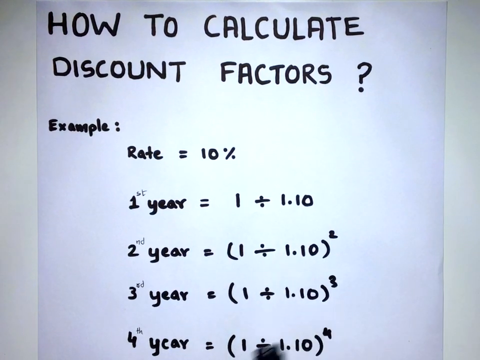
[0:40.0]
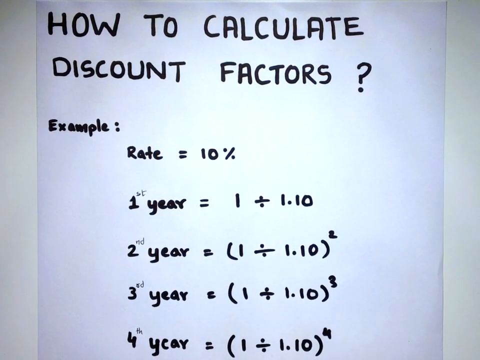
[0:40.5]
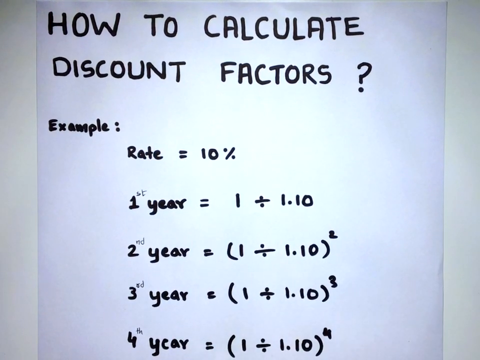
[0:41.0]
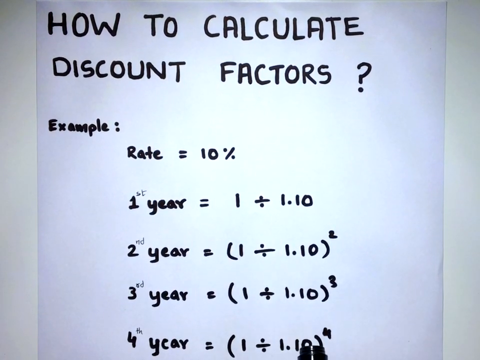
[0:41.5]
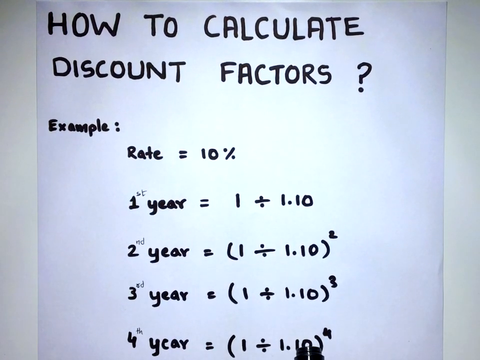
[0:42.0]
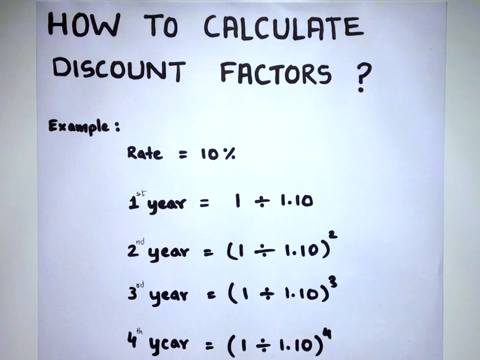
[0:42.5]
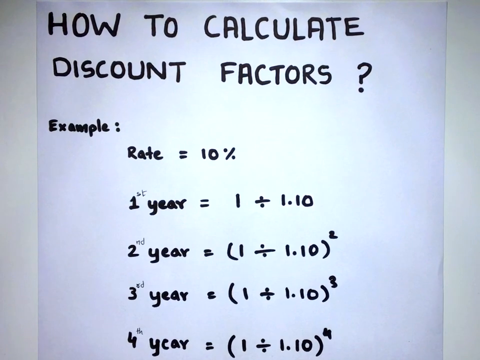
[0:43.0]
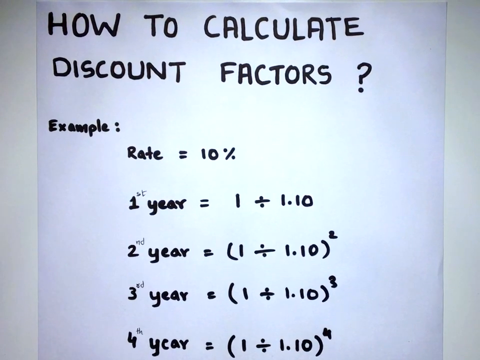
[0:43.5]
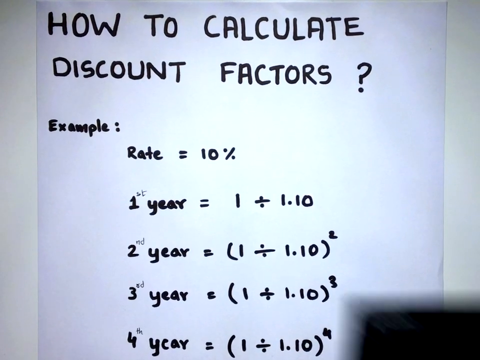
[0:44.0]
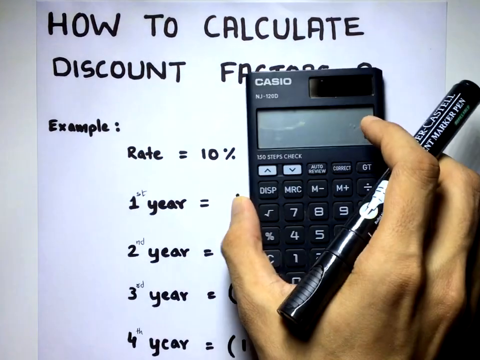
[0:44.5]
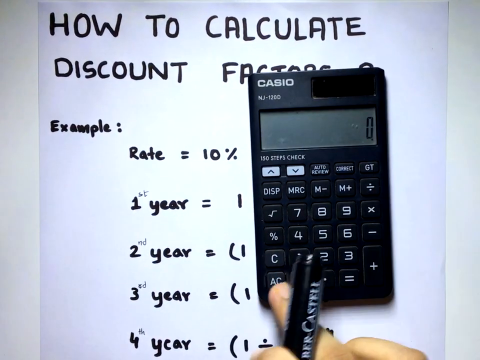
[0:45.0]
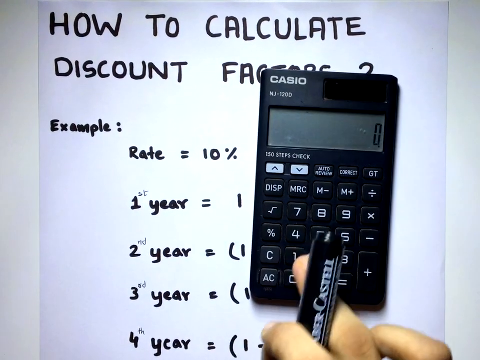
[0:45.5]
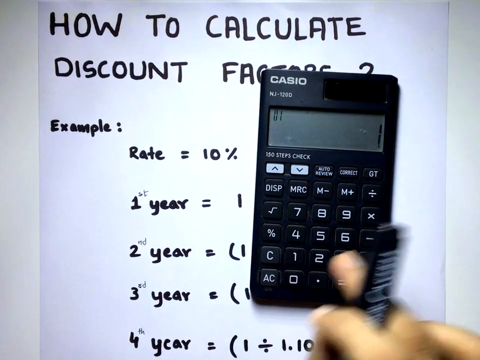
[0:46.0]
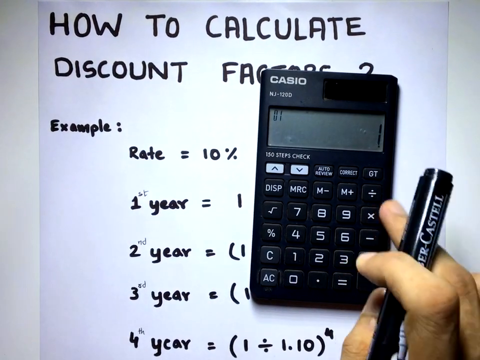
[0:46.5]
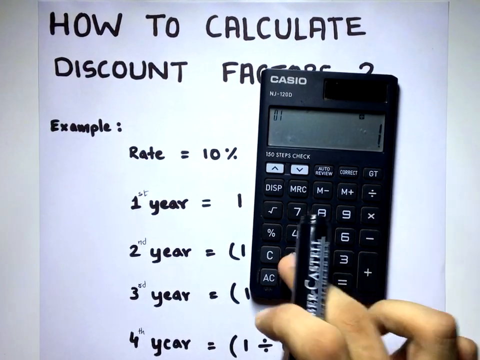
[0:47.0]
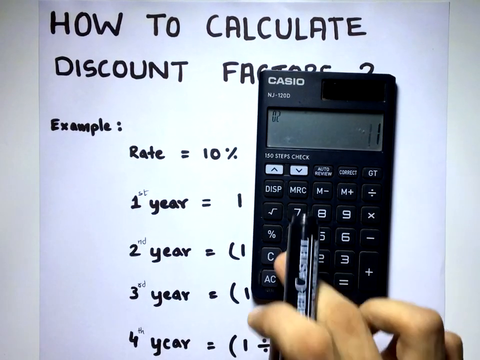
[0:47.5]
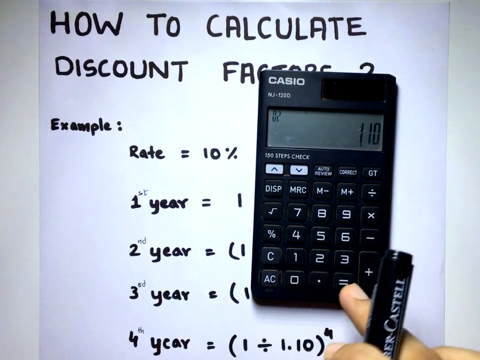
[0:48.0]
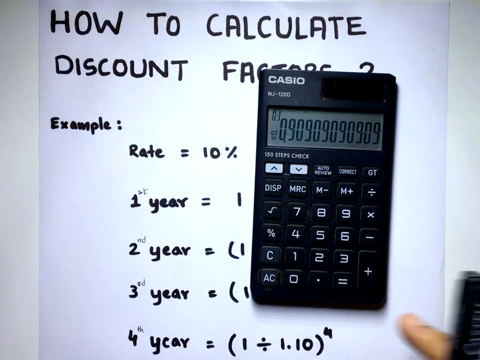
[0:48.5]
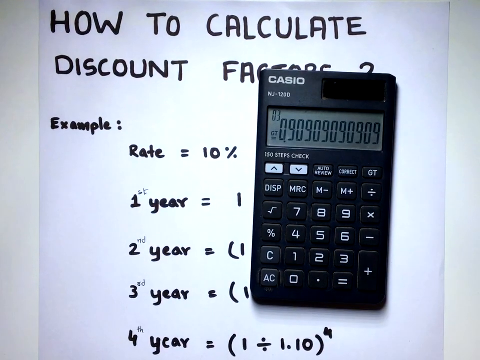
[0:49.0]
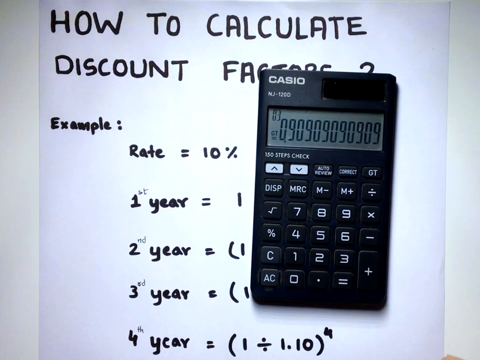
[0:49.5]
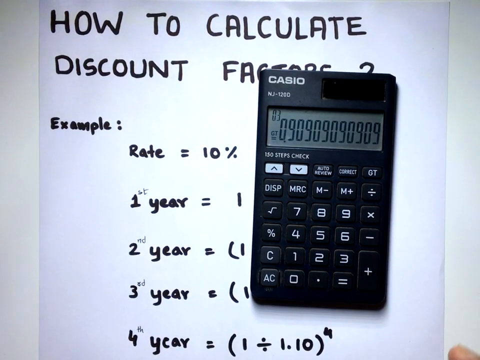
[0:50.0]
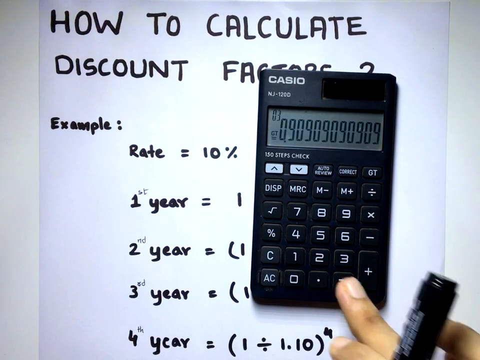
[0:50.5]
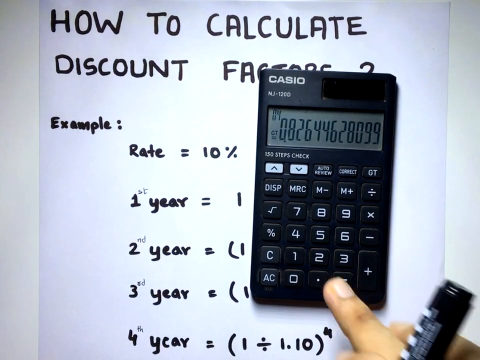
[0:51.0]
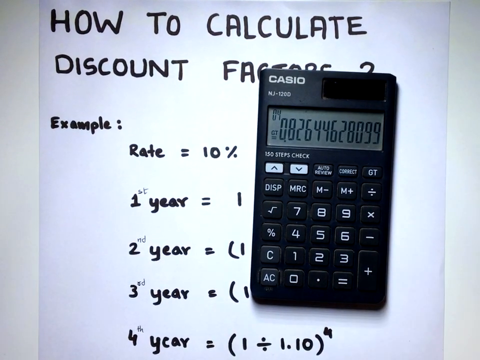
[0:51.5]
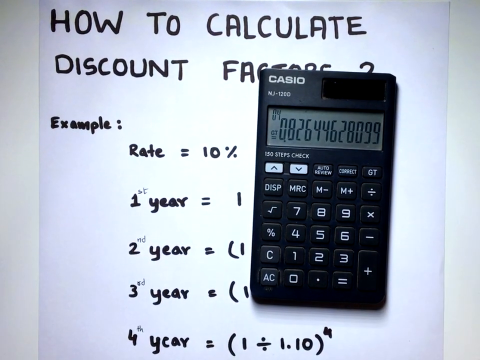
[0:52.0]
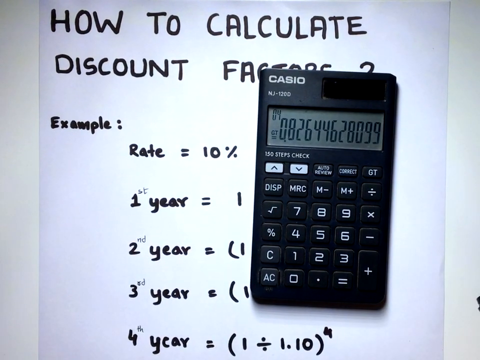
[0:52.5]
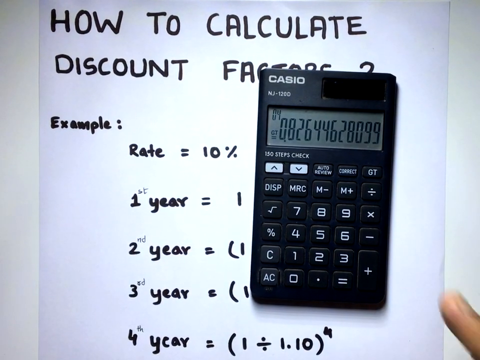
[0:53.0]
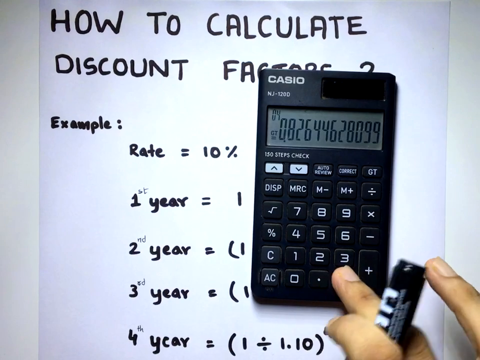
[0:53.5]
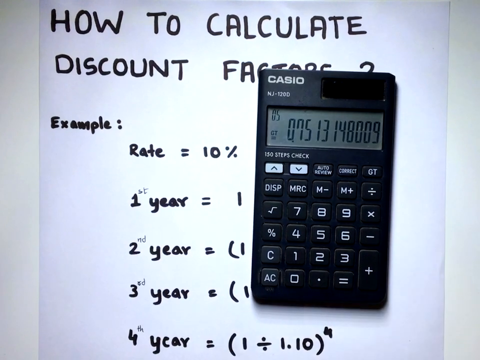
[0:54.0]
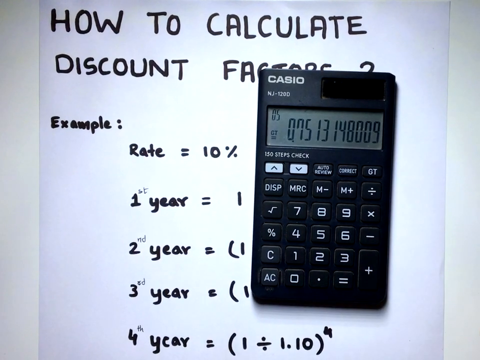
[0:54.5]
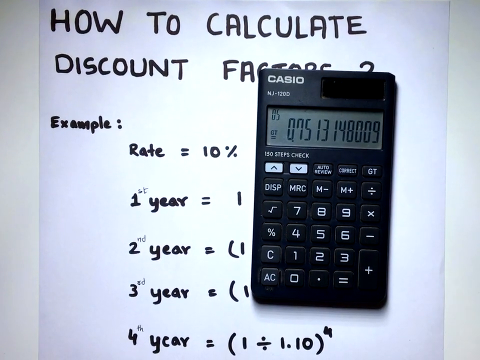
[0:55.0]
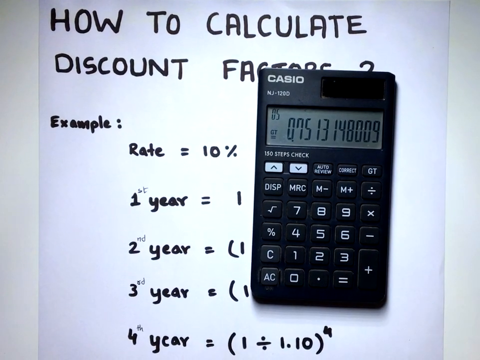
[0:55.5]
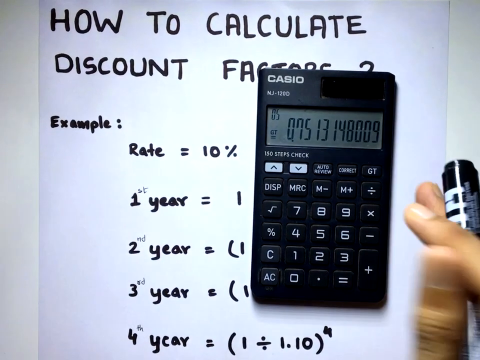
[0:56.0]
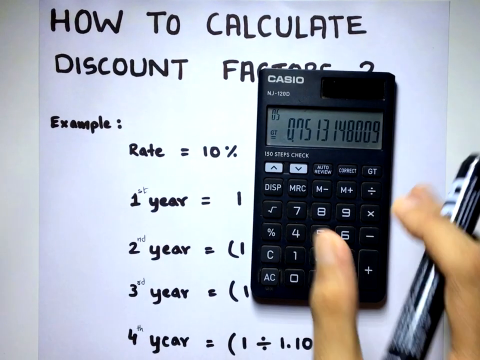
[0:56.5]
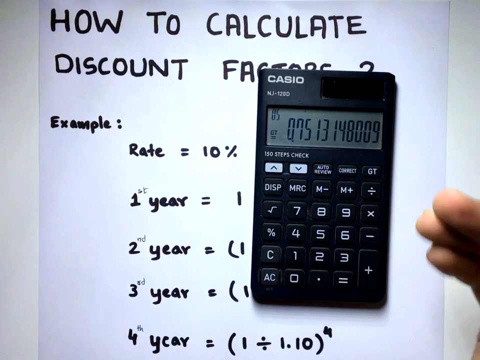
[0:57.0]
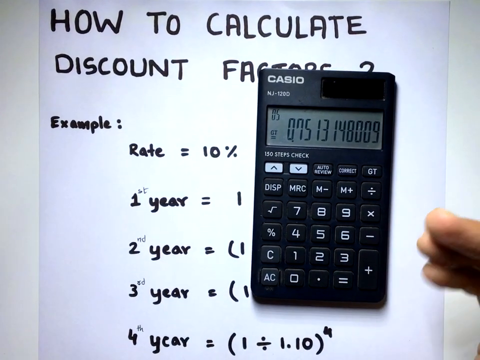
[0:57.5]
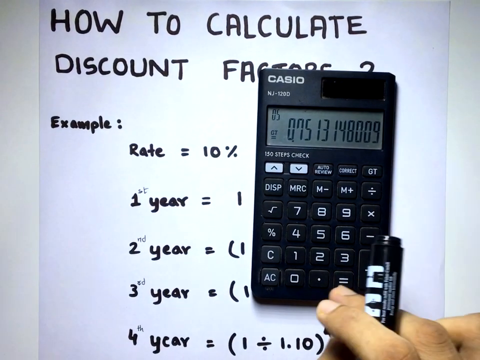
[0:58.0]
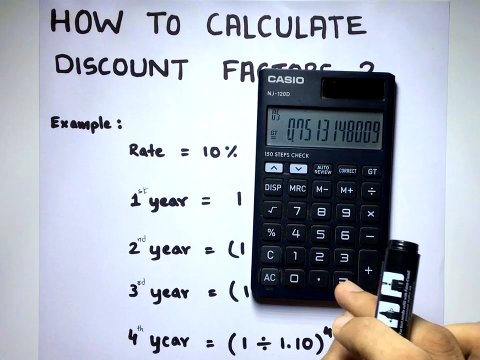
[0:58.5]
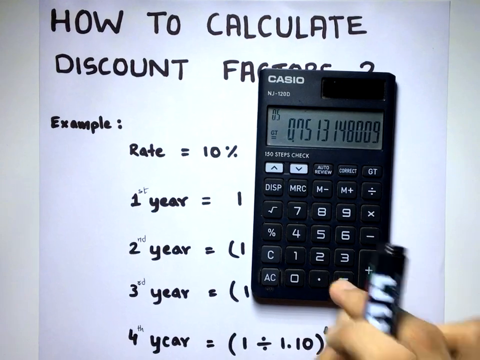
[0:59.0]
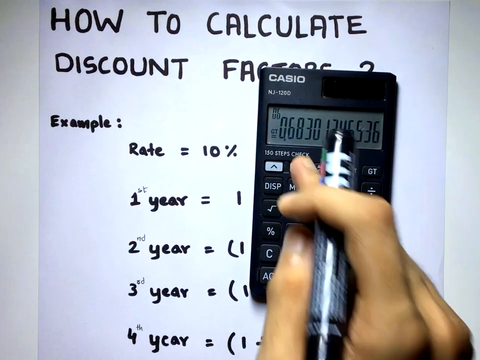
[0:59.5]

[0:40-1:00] Another view shows the discount factor calculation, with the rate example and the first-, second-, third- and fourth-year examples. The hand holding the pen takes out a Casio NJ120D calculator, lays it on the piece of paper right next to the example section, and begins typing in the calculation. Entering the first-year example gives a result of 0.909. He then hits equal and gets 0.826, hits equal again and gets 0.751, and hits equal again and gets 0.68. It appears to show that repeatedly hitting equal progressively gives the discount for the first year, second year, third year and so on.